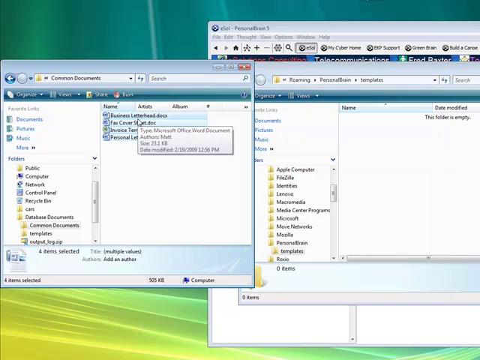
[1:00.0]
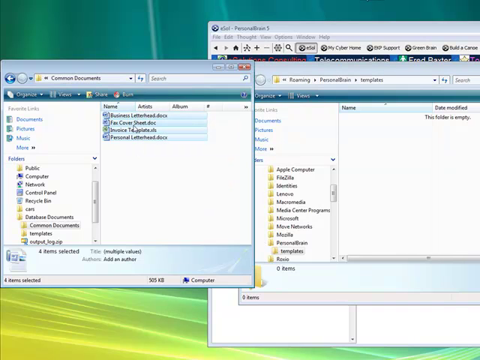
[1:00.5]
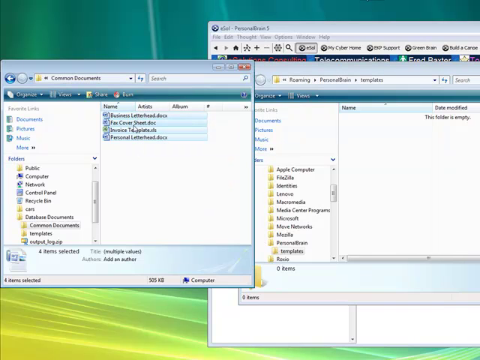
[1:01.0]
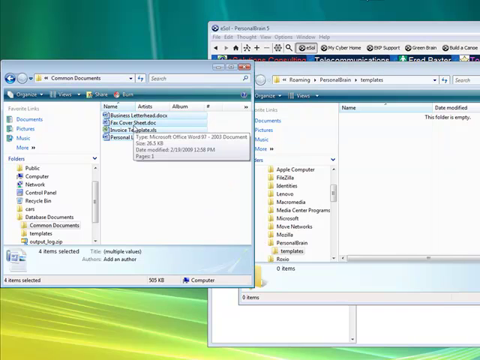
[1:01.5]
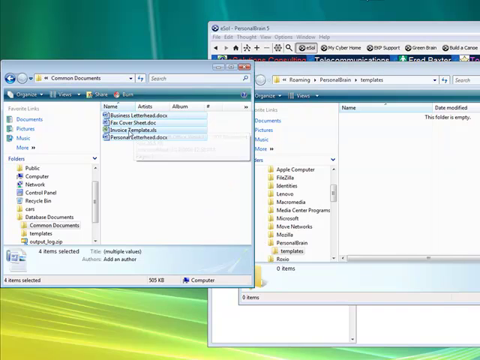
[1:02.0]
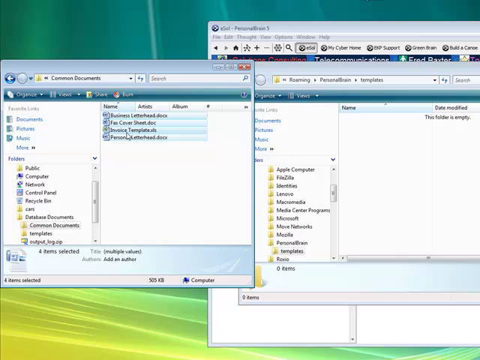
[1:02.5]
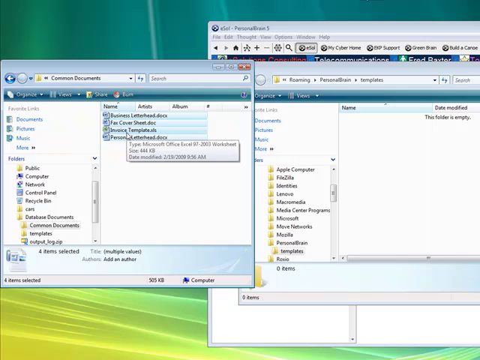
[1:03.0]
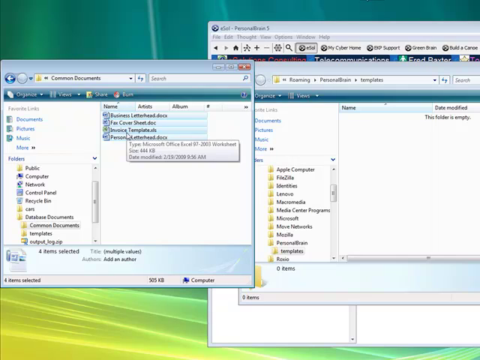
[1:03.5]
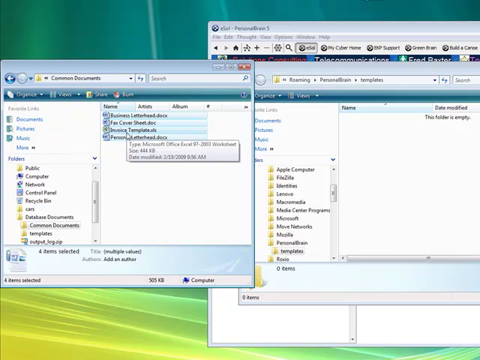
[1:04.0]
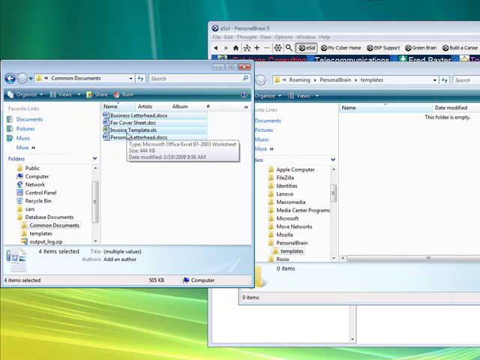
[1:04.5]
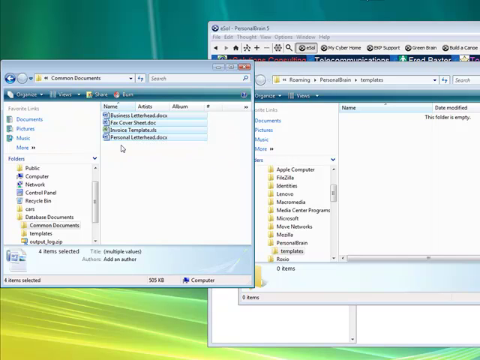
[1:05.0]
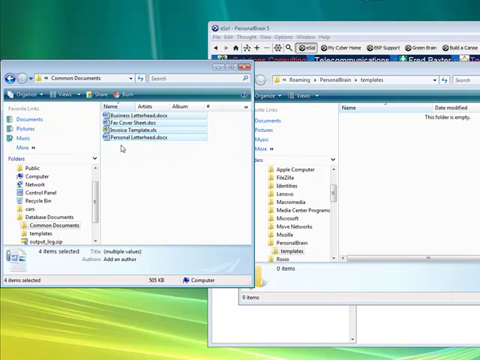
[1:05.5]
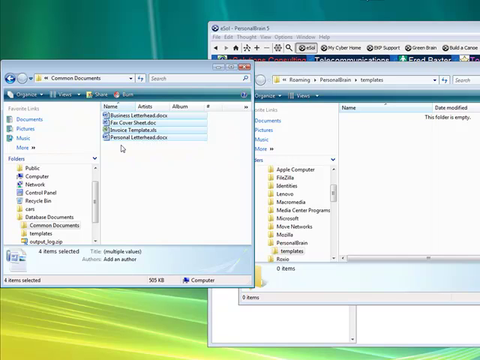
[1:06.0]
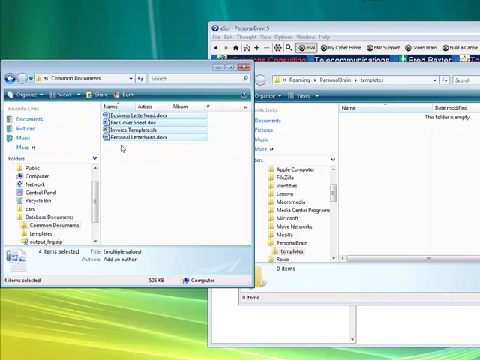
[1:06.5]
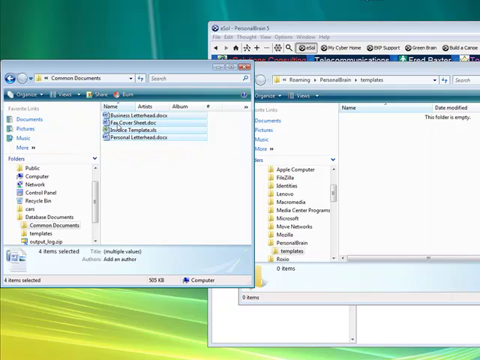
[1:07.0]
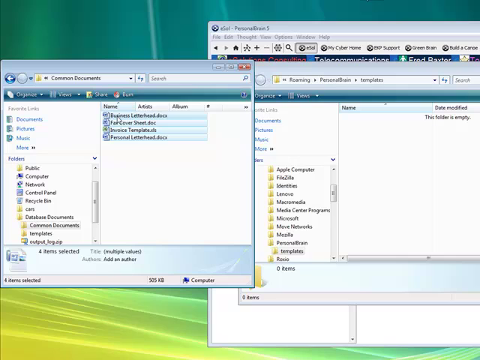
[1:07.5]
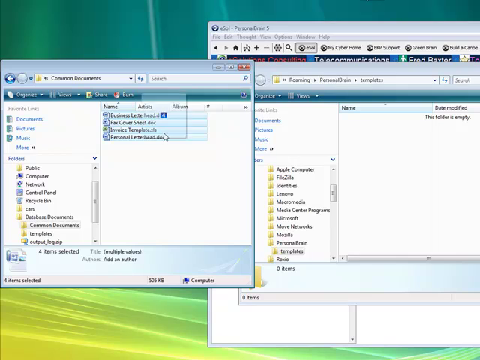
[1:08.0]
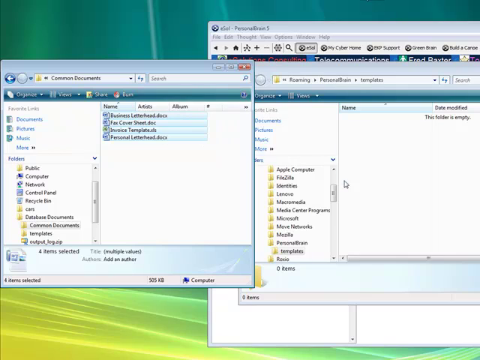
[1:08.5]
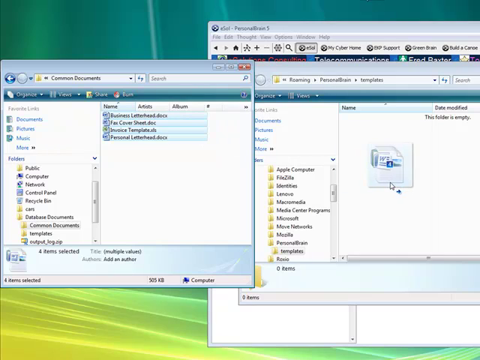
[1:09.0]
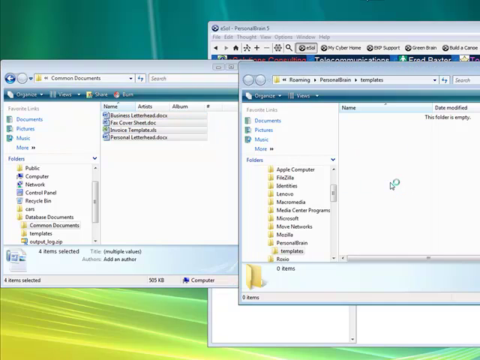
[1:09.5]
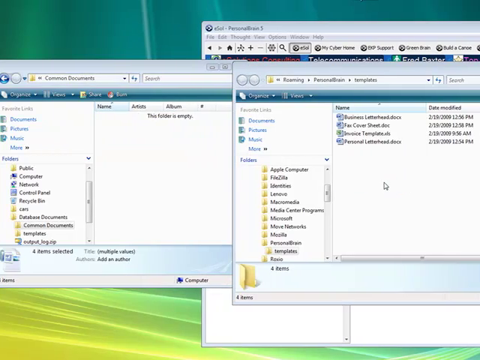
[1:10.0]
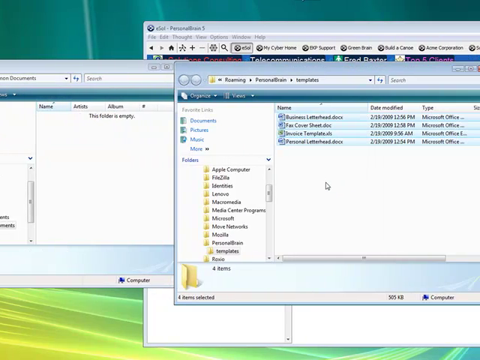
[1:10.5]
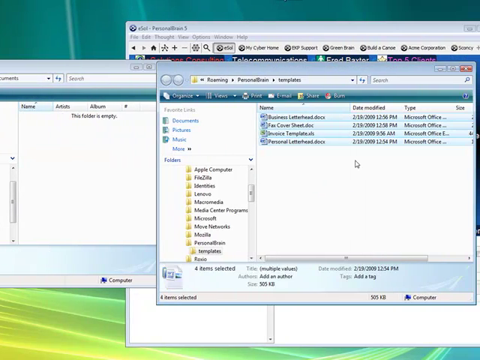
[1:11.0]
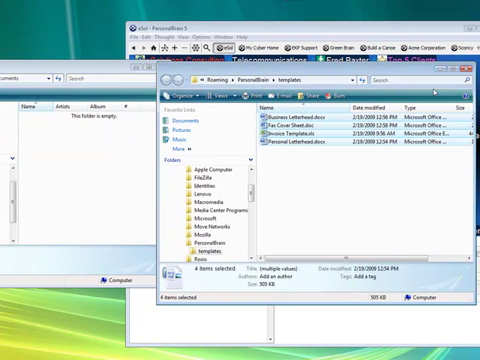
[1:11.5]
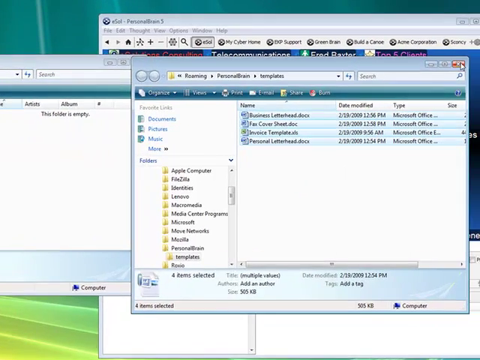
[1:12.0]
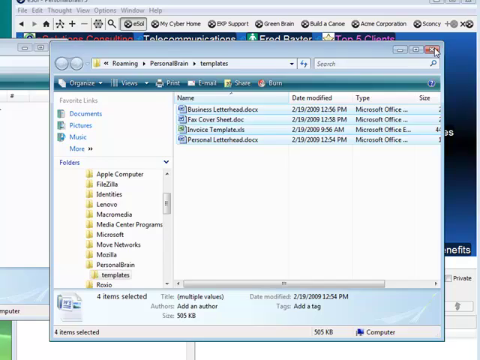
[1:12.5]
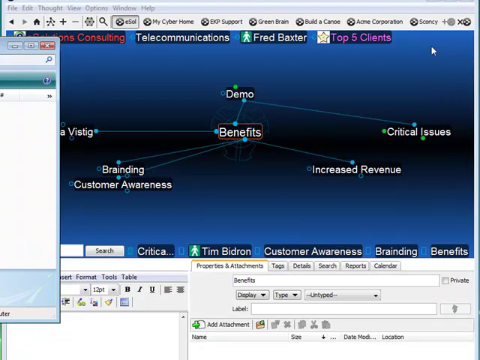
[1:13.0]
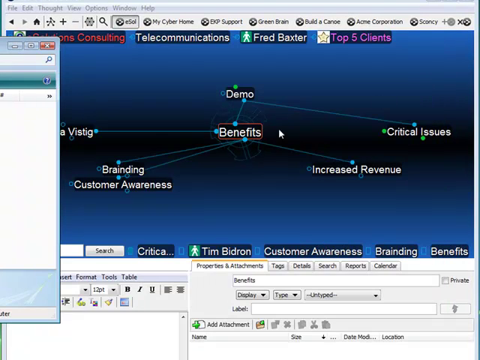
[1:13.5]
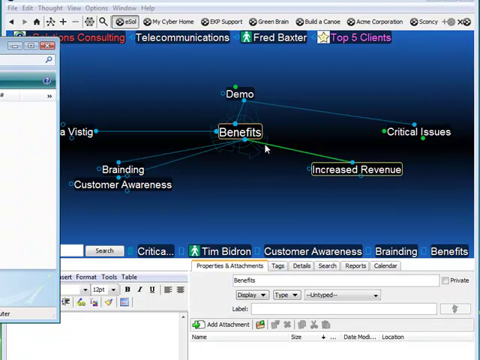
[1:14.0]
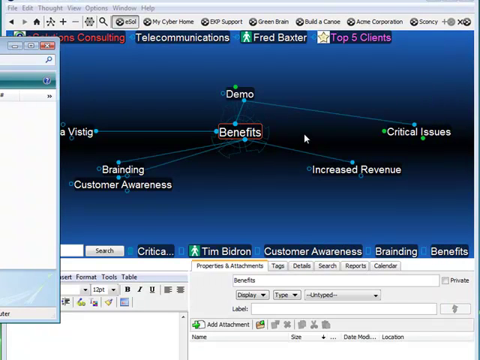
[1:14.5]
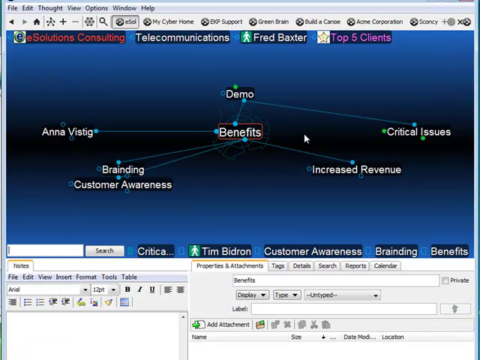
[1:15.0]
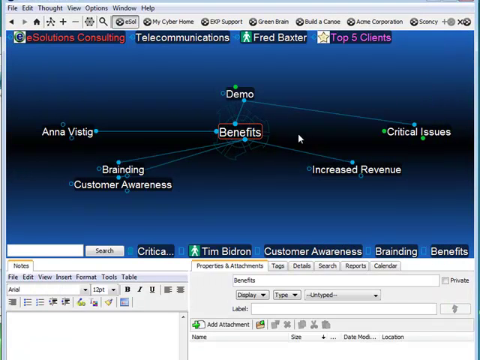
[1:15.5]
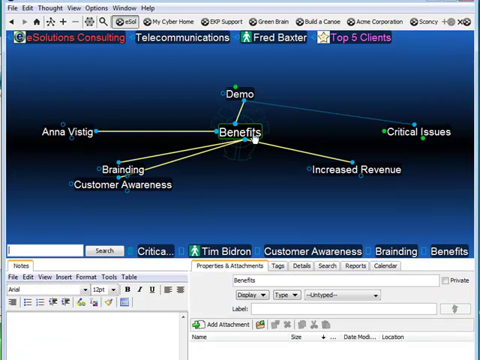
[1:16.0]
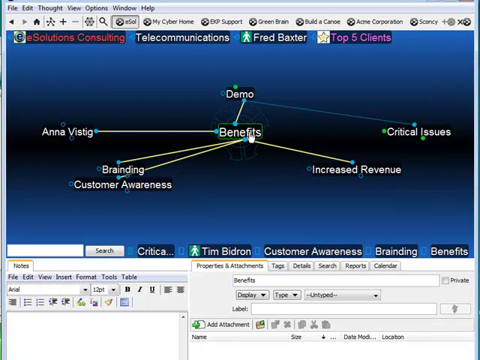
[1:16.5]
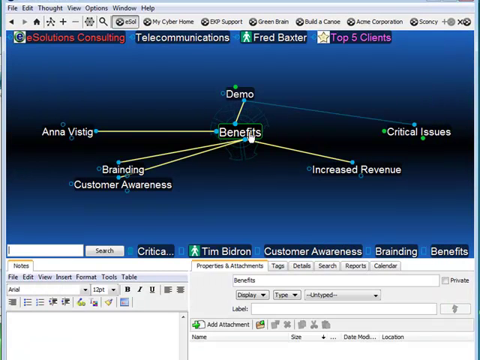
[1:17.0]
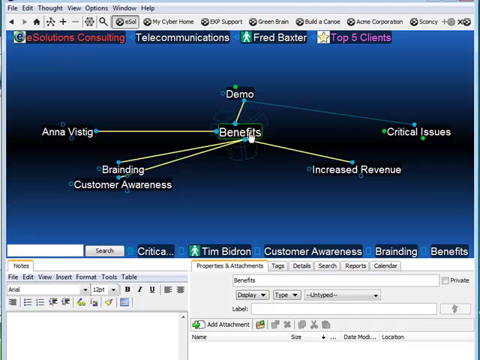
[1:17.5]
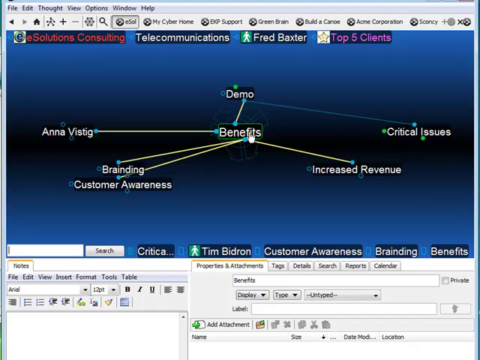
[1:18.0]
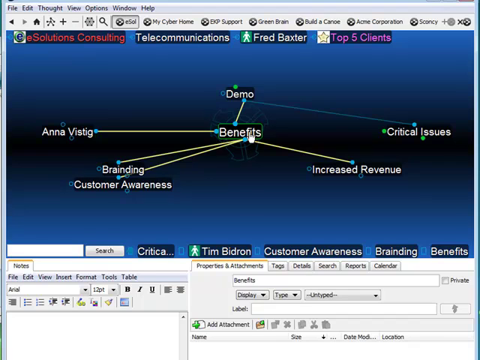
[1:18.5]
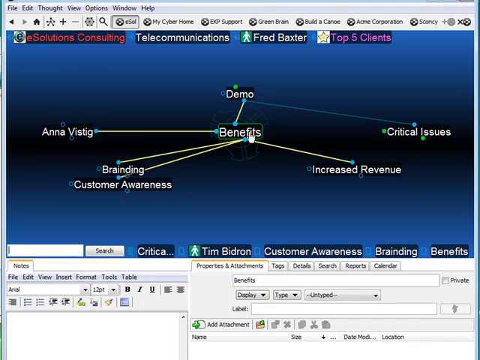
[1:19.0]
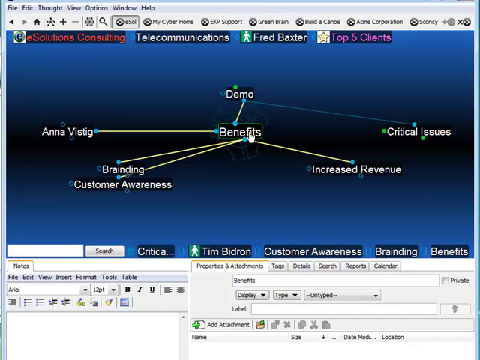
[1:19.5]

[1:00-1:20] The user hovers over all four files in the folder: business letterhead, fax cover sheet, invoice template and personal letterhead. He drags all four files over to the personalization templates folder, then closes the folder and looks back at the map with "analytics," "benefits," "demo," "critical issues," "increased revenue," "branding" and "customer awareness."